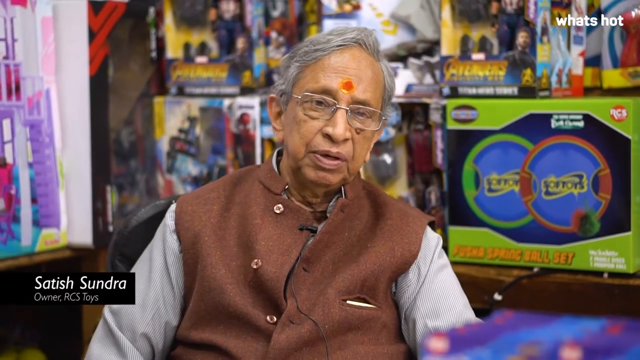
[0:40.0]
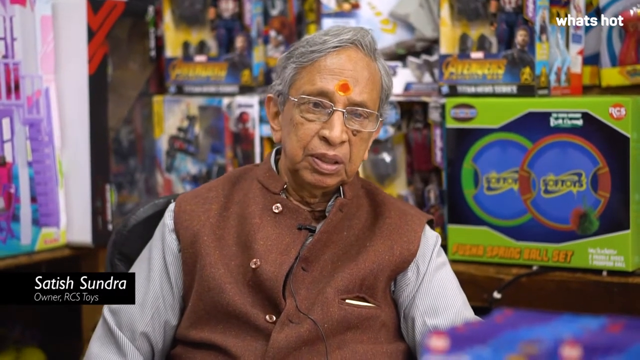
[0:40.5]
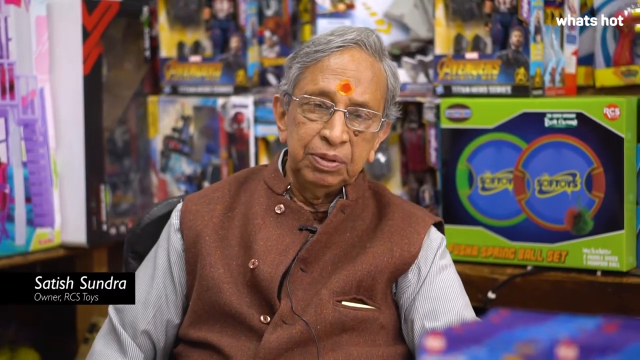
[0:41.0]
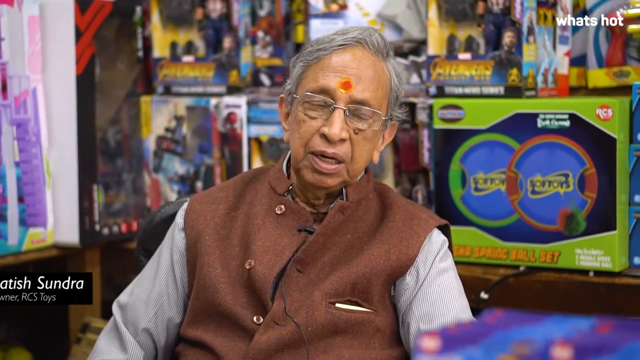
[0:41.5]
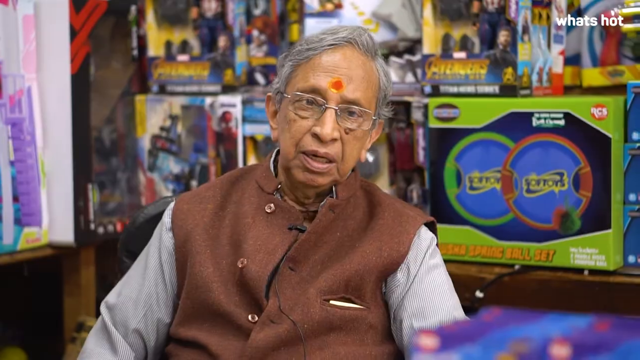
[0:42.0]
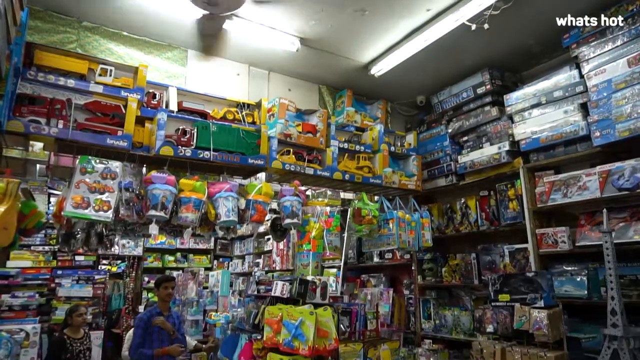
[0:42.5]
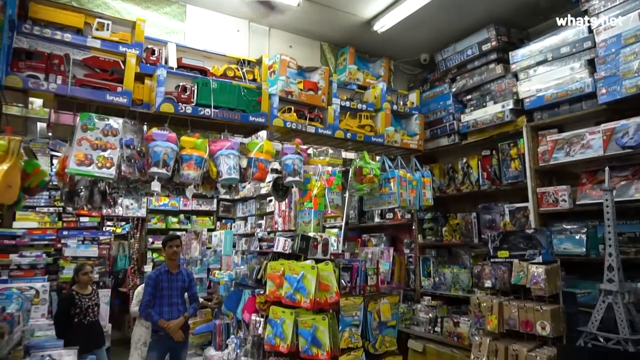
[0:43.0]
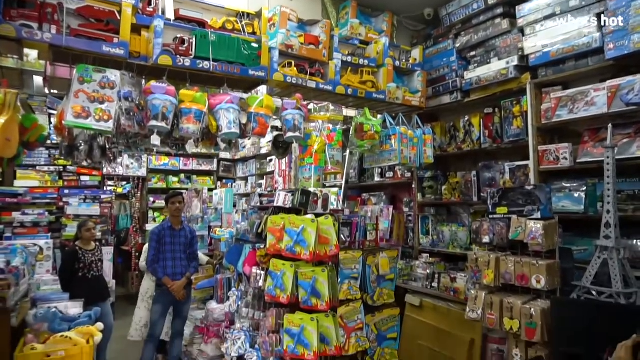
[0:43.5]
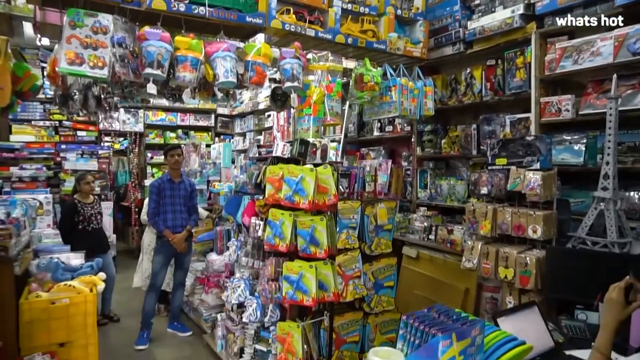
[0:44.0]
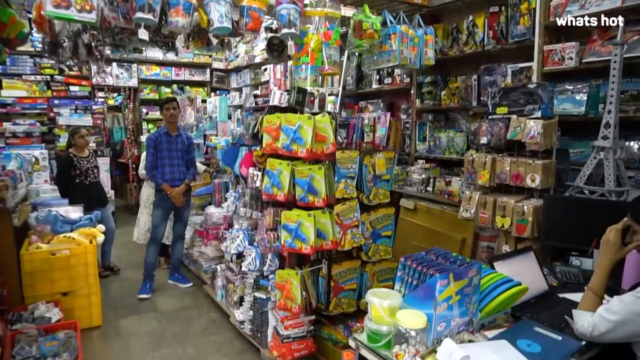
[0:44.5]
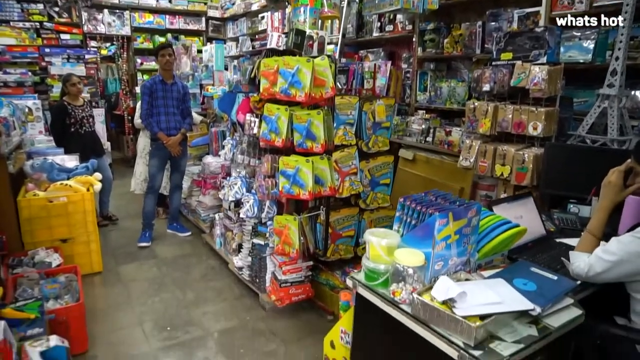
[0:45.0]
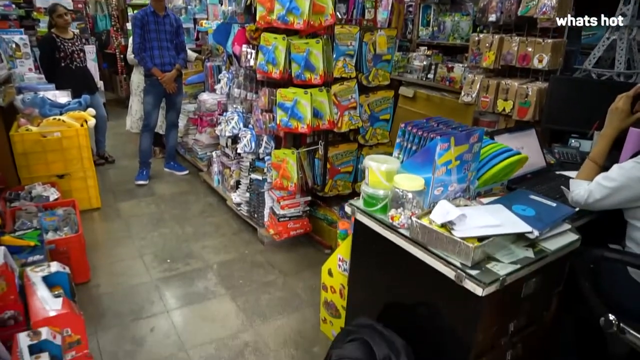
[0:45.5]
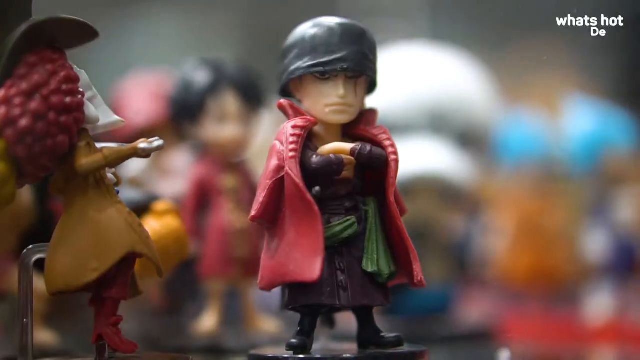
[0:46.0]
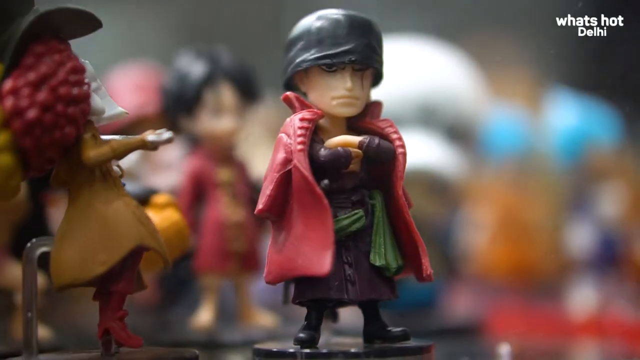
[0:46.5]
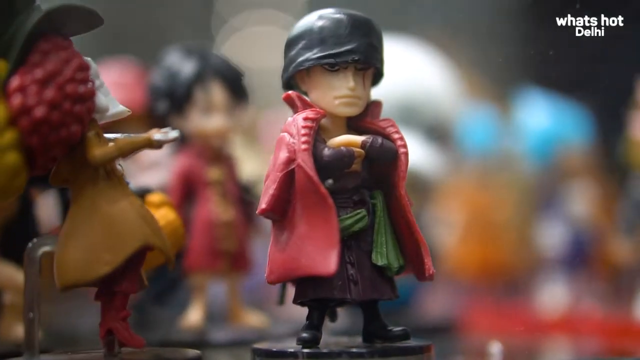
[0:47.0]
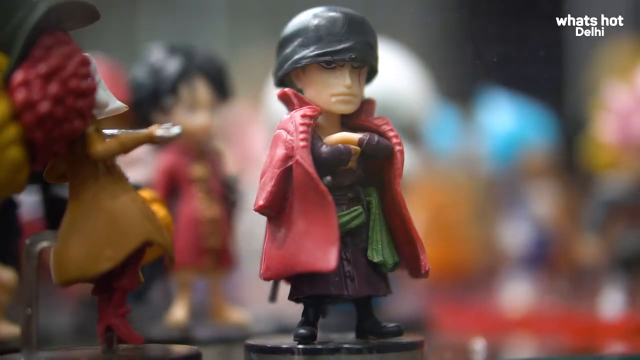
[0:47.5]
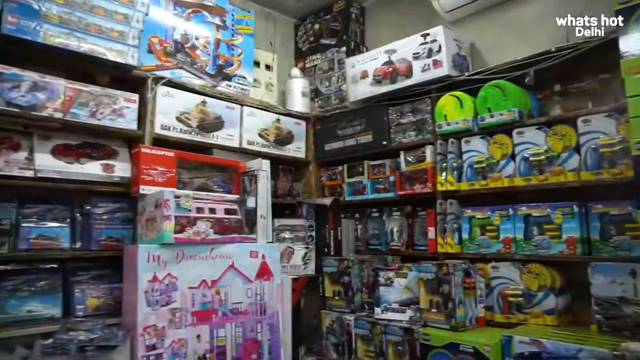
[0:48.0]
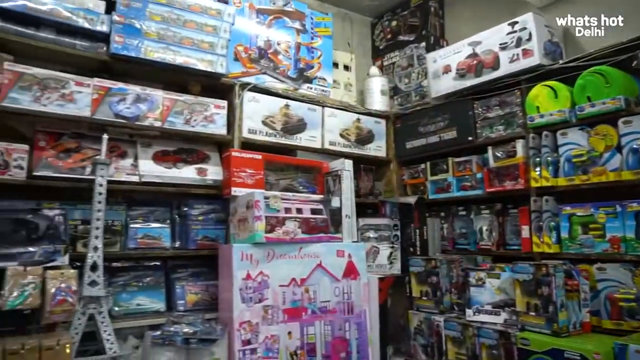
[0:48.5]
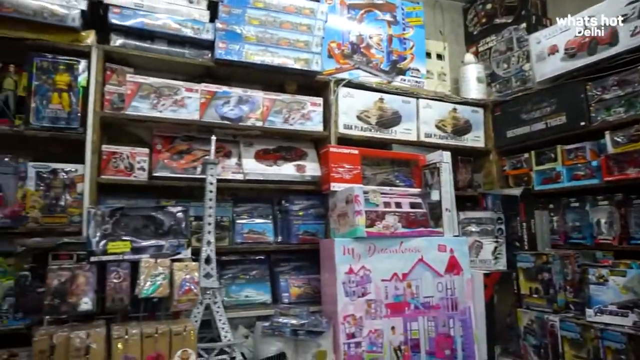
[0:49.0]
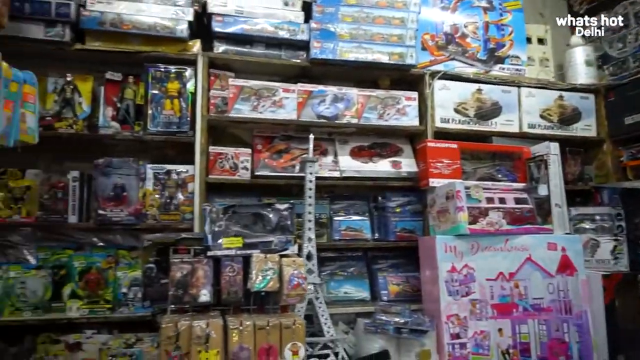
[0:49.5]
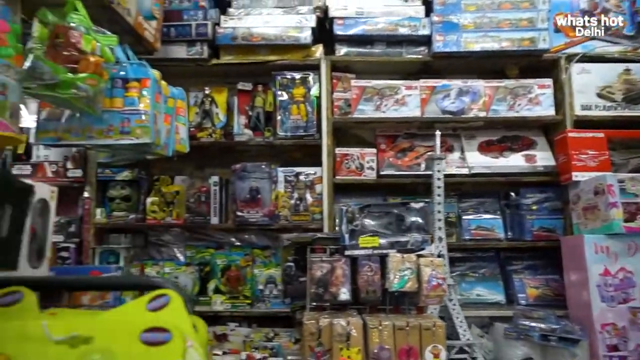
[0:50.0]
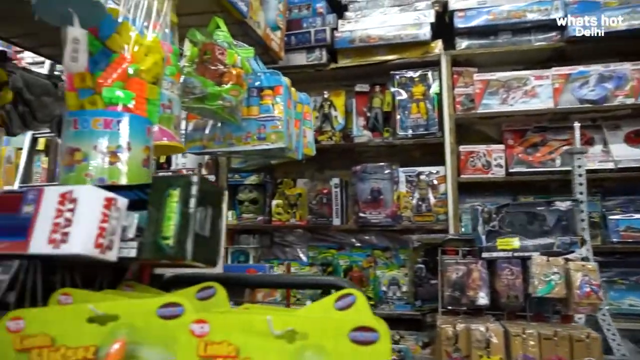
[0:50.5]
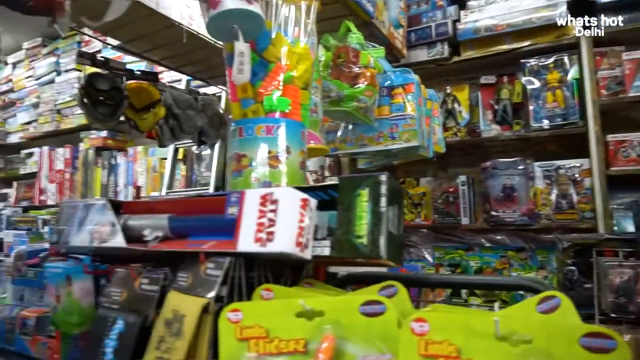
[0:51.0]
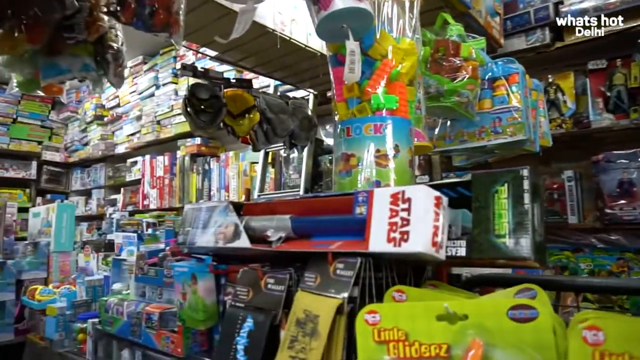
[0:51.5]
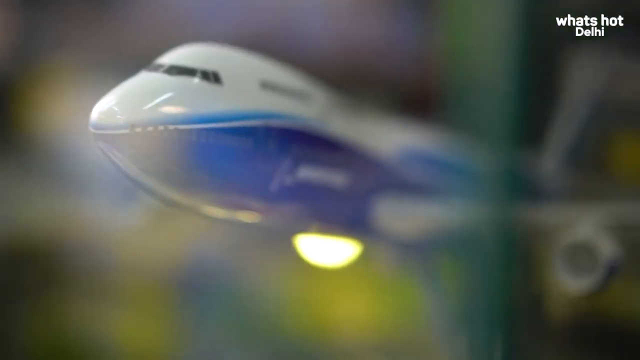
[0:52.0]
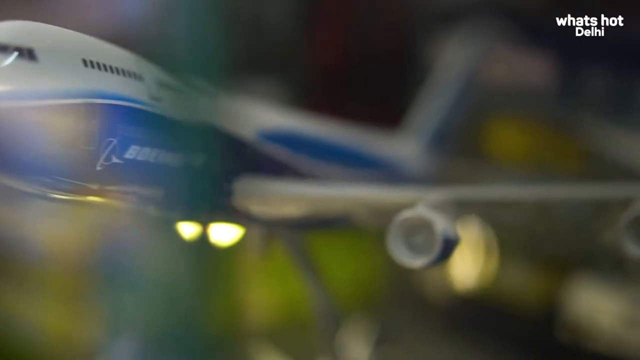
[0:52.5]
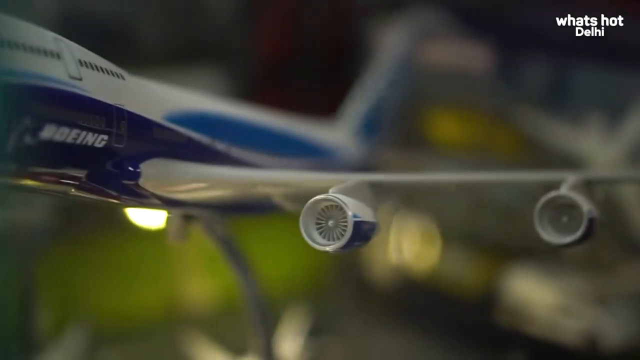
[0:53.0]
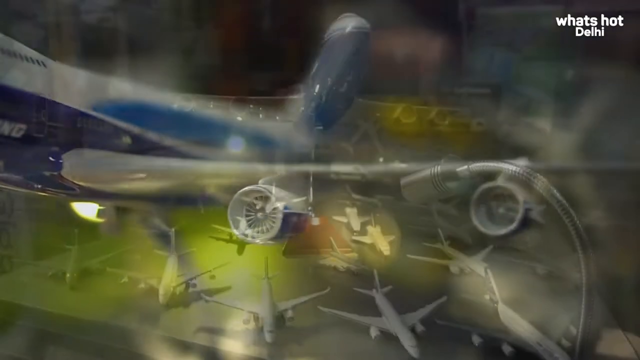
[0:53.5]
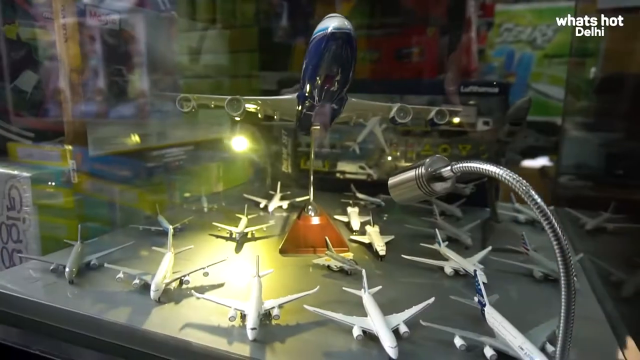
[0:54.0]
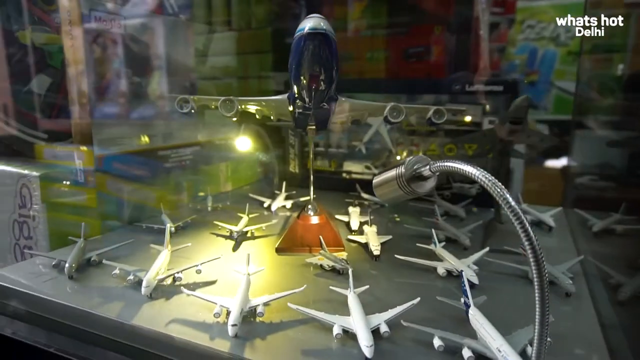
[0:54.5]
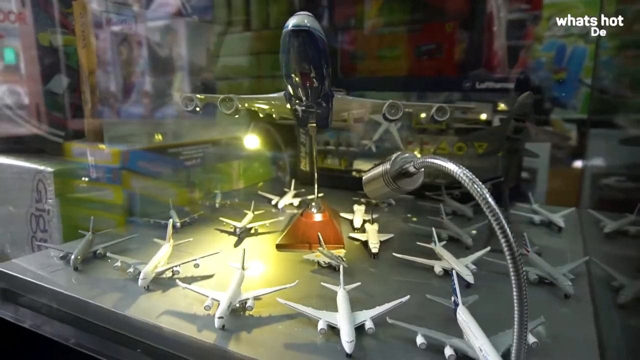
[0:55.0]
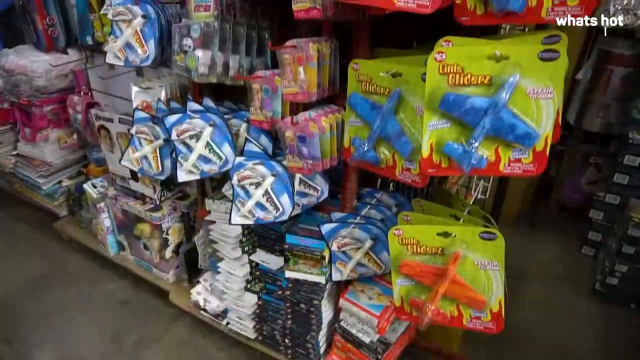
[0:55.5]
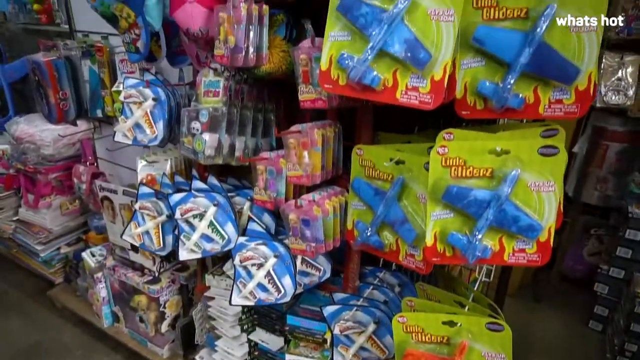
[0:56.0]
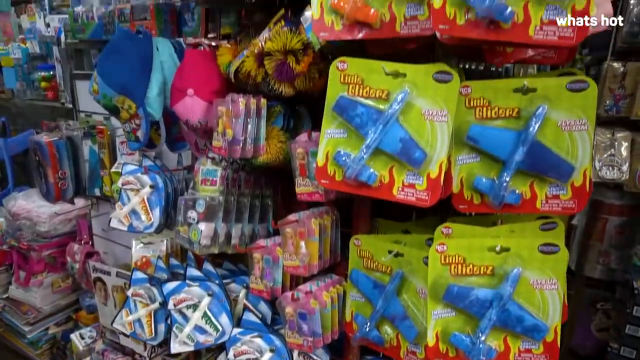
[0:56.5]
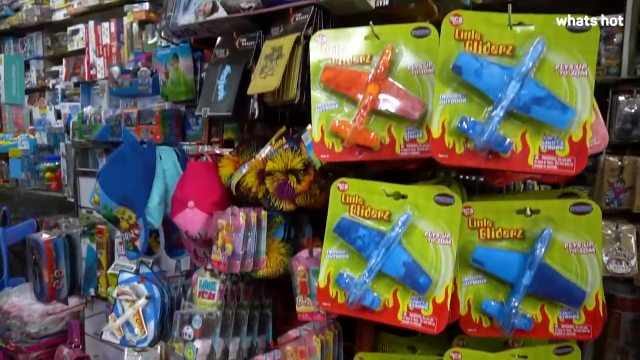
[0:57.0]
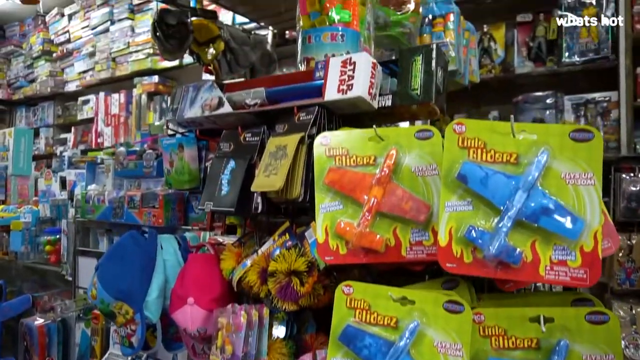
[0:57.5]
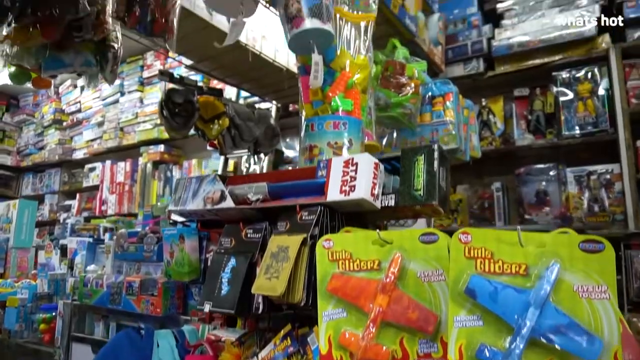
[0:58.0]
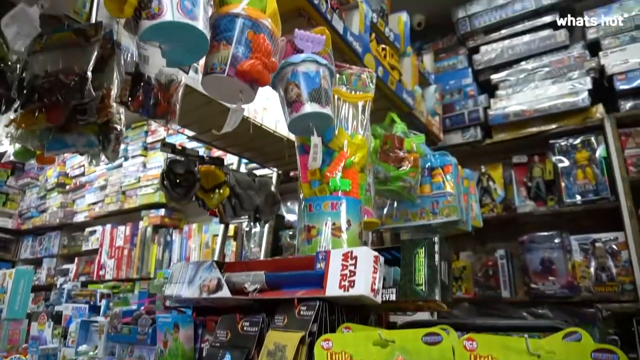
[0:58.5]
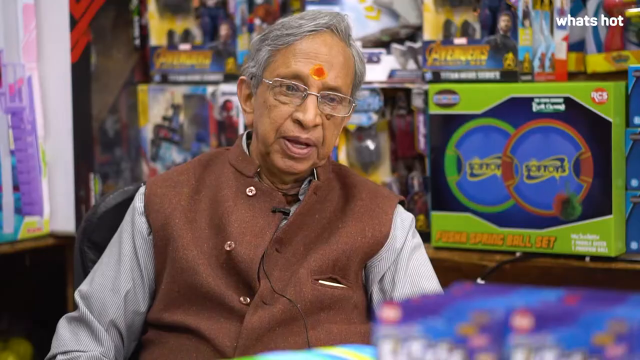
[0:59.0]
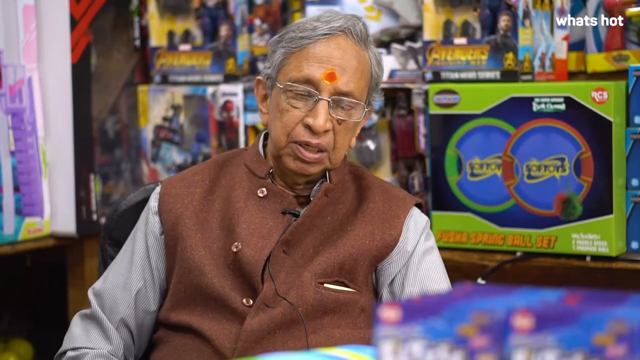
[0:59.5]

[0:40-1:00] The two walk into the store and showcase dozens upon dozens of toys, including lots of Peppa Pigs, Pikachu and the minions, with lots of plushies of these characters. Text at the bottom left apparently identifies a man as Sandra, the owner of the store.